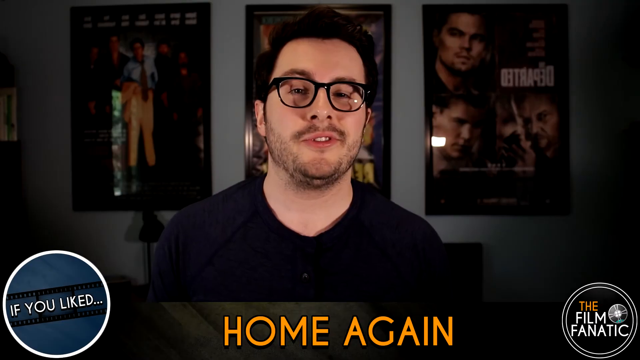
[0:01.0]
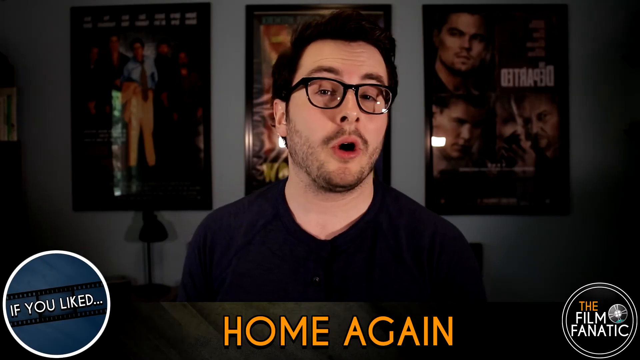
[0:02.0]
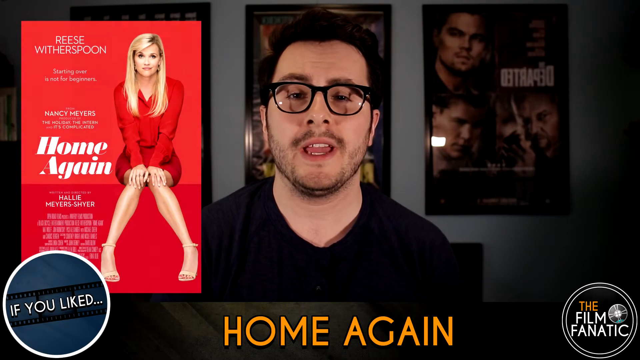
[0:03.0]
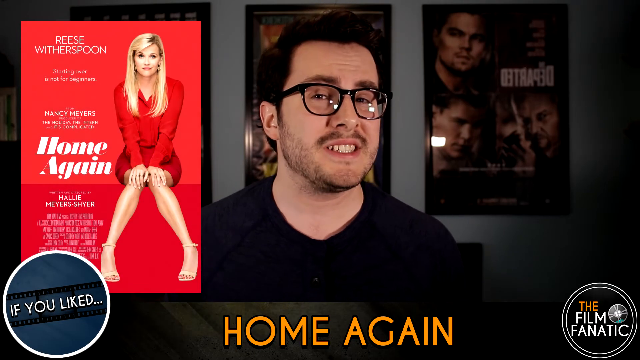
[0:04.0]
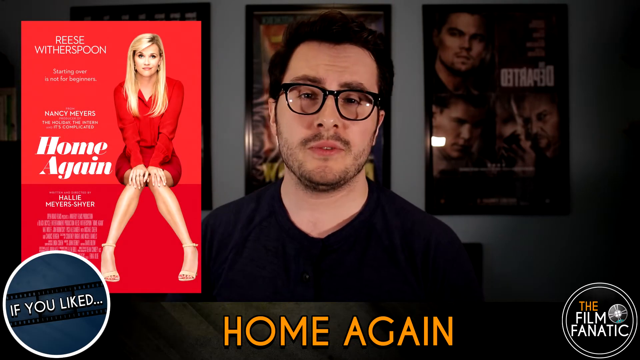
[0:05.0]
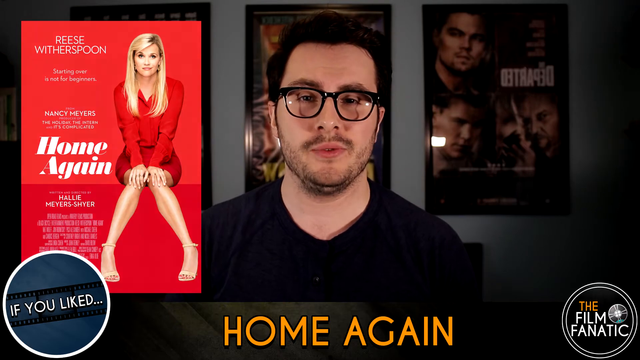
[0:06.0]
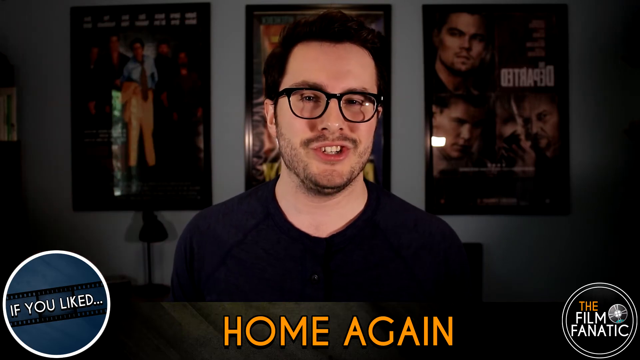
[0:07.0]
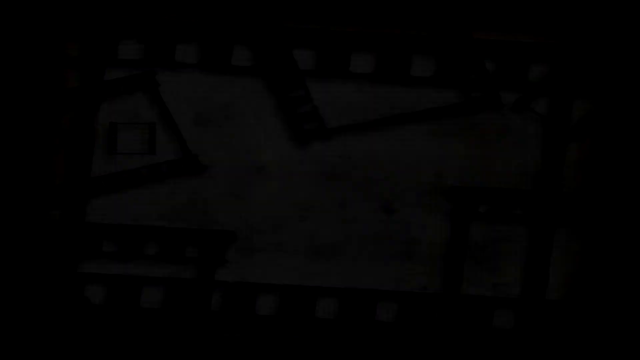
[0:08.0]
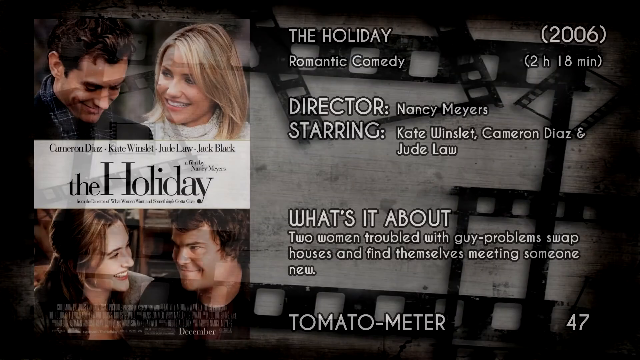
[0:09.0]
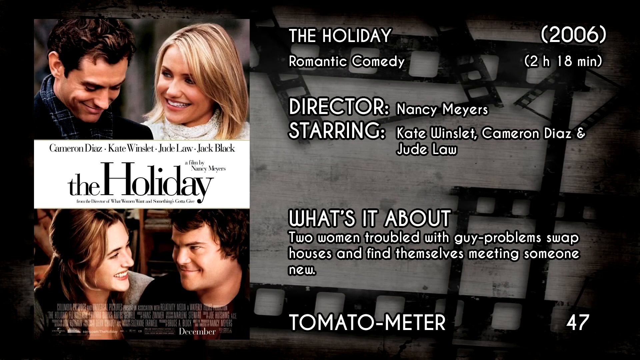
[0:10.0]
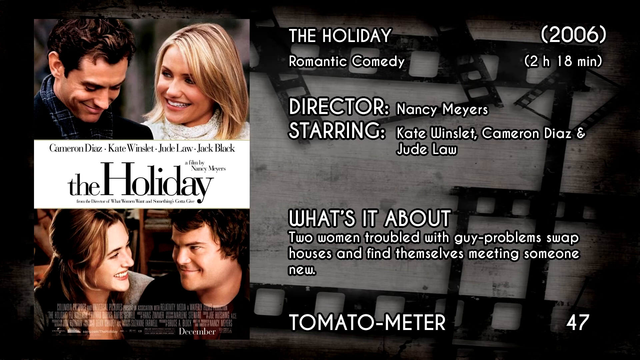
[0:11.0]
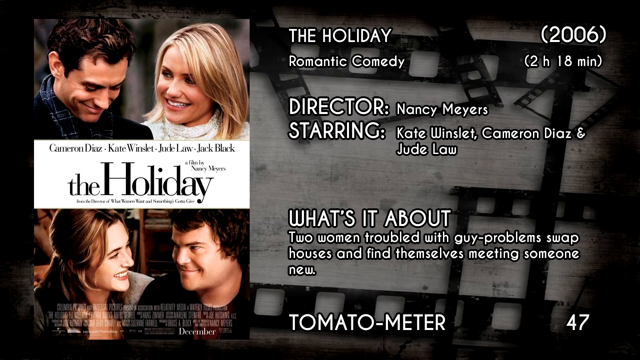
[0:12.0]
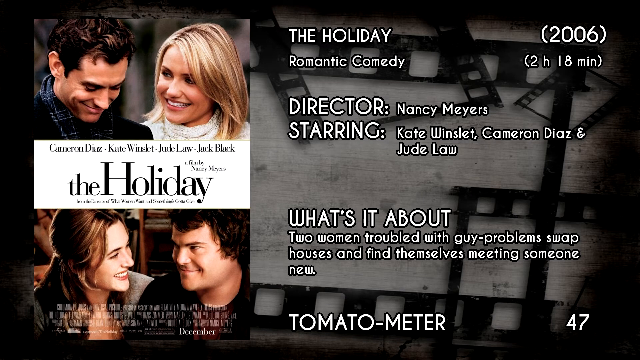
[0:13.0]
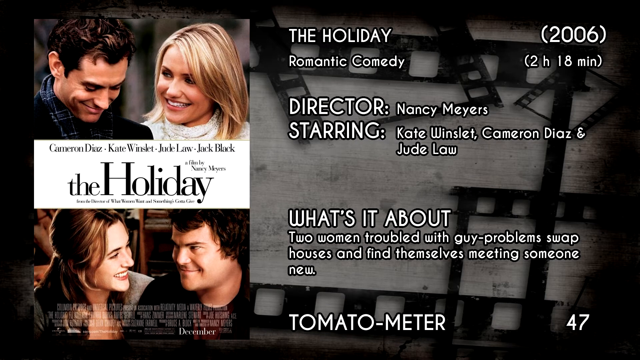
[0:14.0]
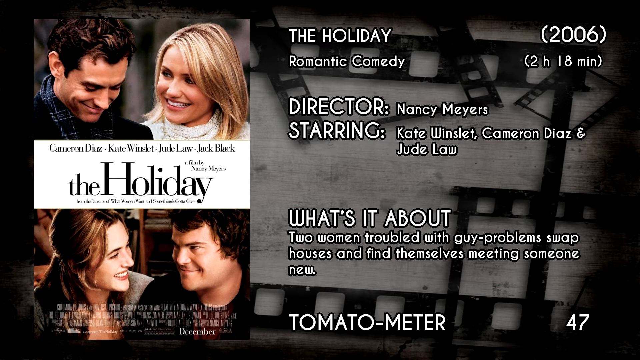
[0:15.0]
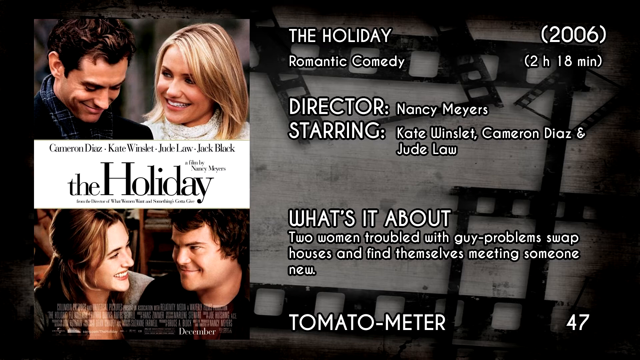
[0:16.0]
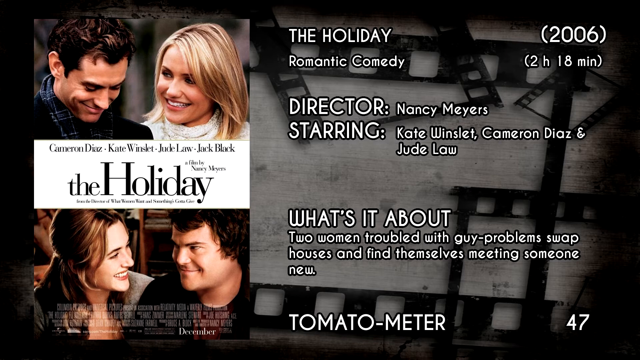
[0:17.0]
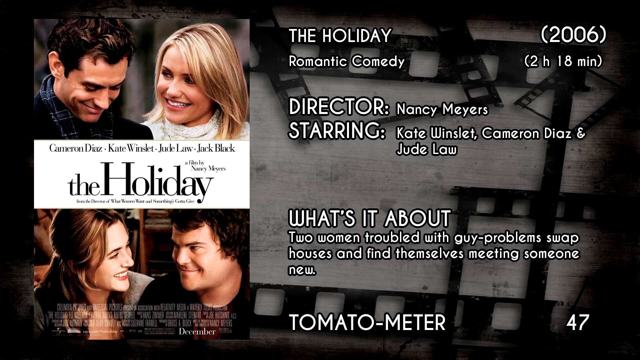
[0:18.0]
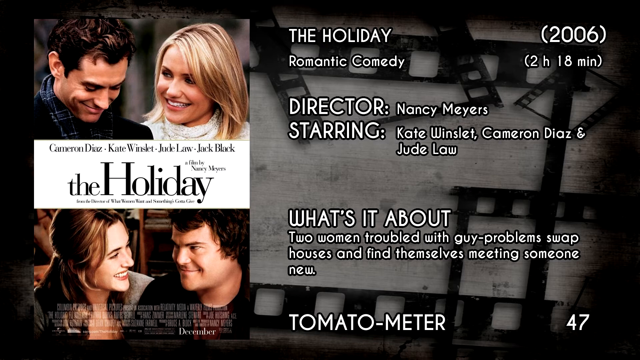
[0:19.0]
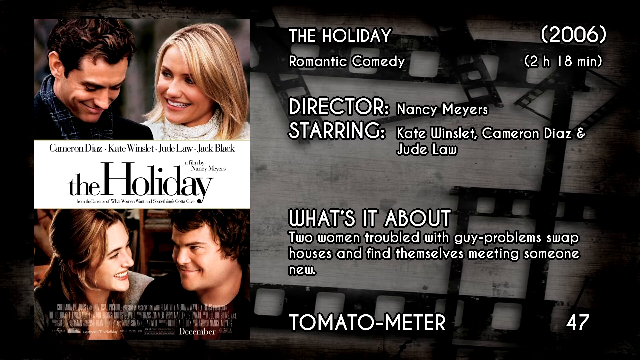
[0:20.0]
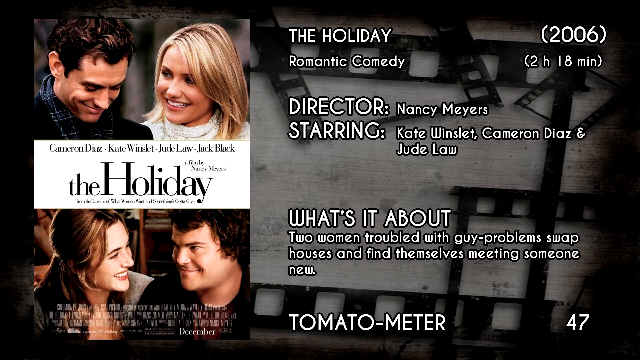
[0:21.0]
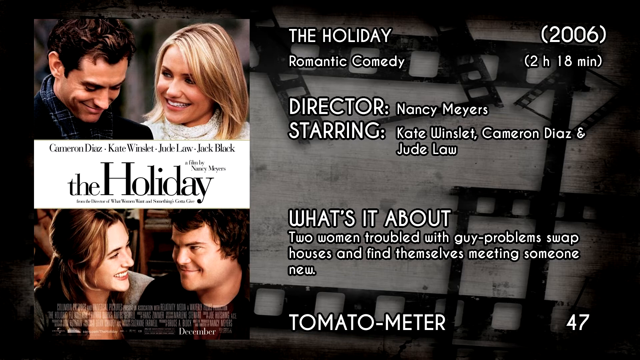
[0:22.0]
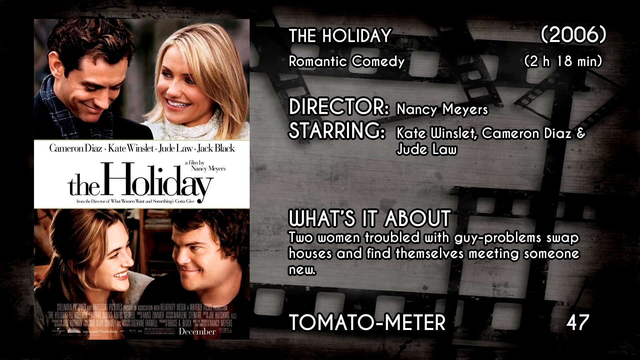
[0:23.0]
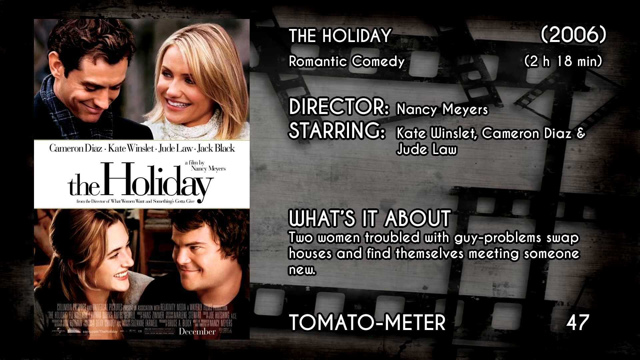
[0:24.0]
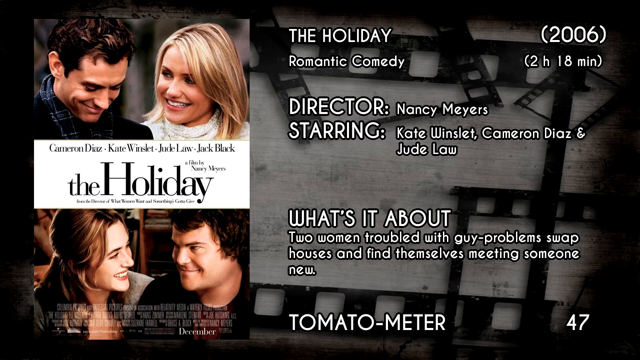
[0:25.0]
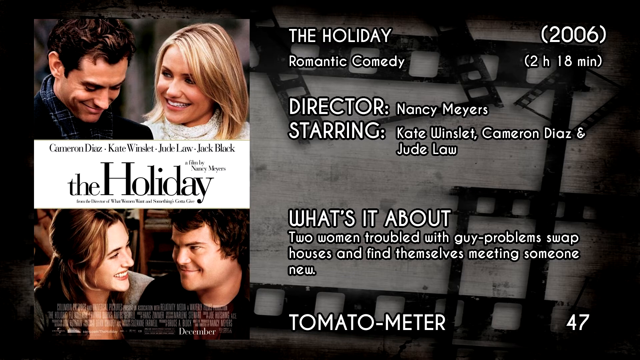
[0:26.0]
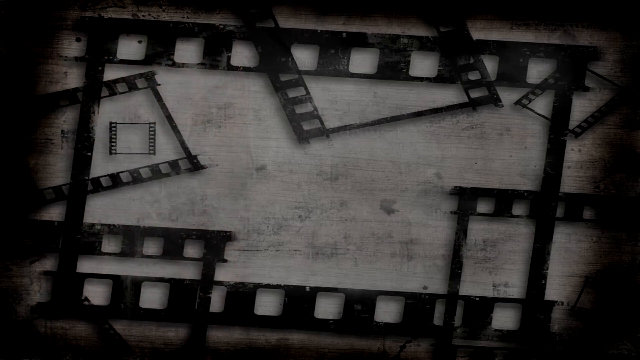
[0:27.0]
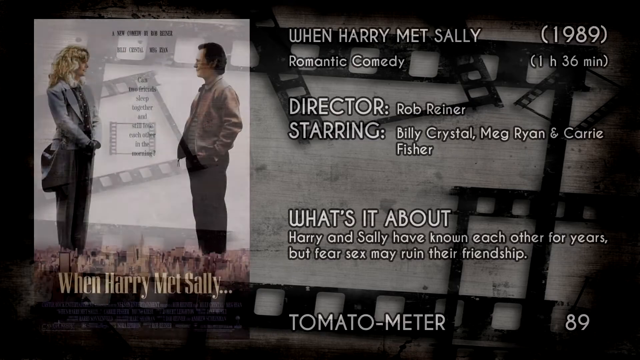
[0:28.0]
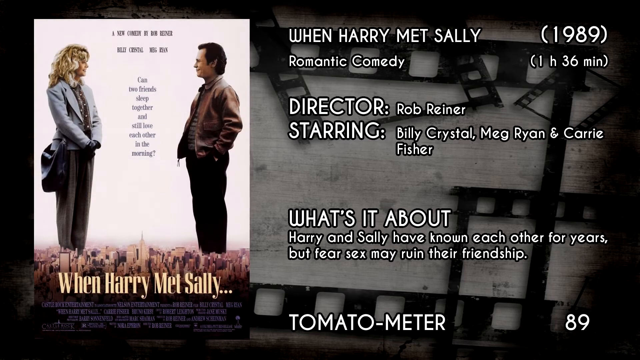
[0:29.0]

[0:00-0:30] The video appears to feature the film Home Again with the actress Rizzi Witherspoon. In the left corner of the screen is the film's cover, with the actress's name, Rizzi Witherspoon, written in a very strong red. Below it is the film's name, Home Again, along with information and other names. The actress's photo is right next to it: she is sitting, wearing a red cap and red clothes, matching the red cover tone on tone. The presenter of the program appears; he wears black glasses that match his black clothes and has a beard. Another film then appears on the screen: The Holiday, a 2006 romantic comedy, 2 hours and 18 minutes long, directed by Nancy Meyers and starring Kate Winslet, Cameron Diaz and Jude Law. Its summary involves two women with a problem with a boy who change houses and meet totally new people.